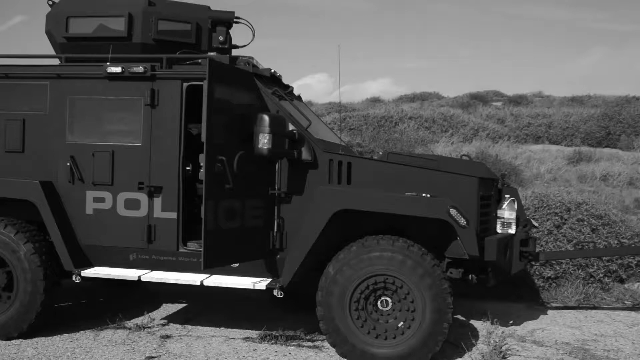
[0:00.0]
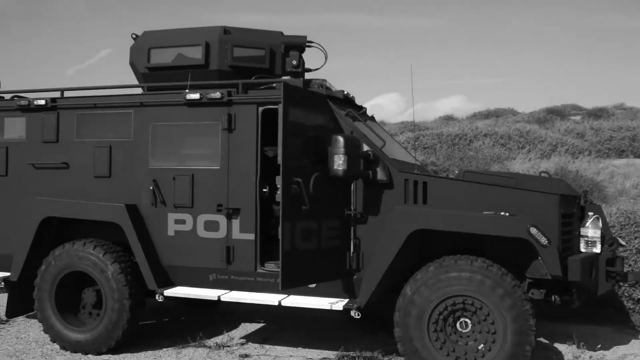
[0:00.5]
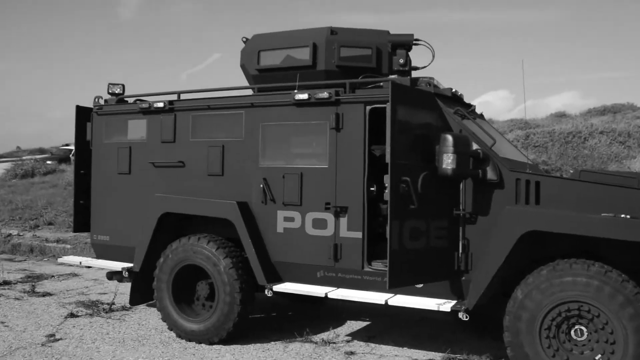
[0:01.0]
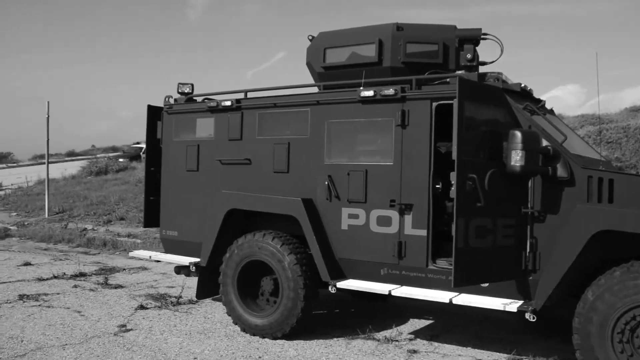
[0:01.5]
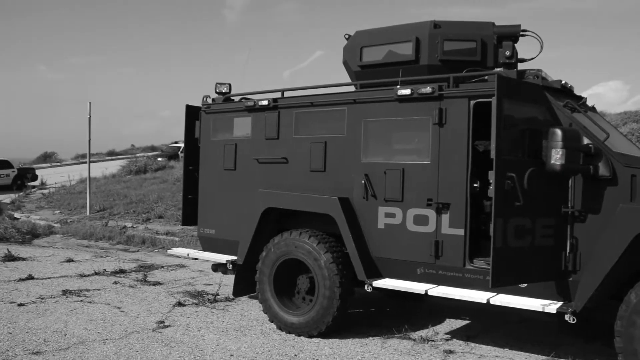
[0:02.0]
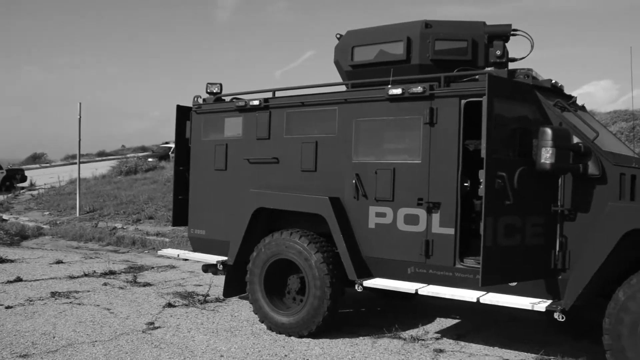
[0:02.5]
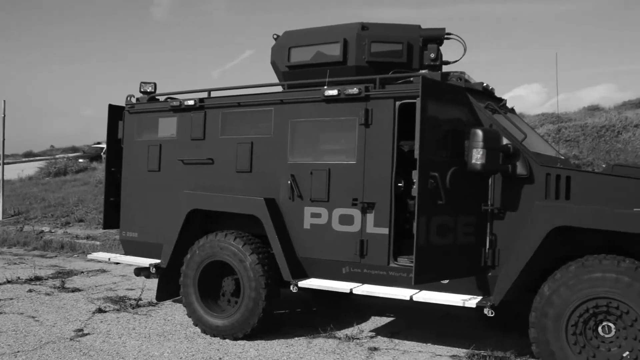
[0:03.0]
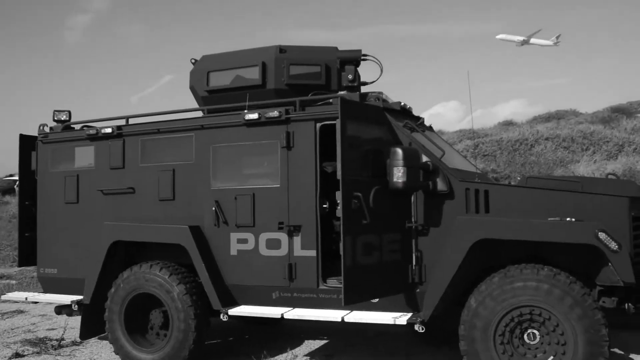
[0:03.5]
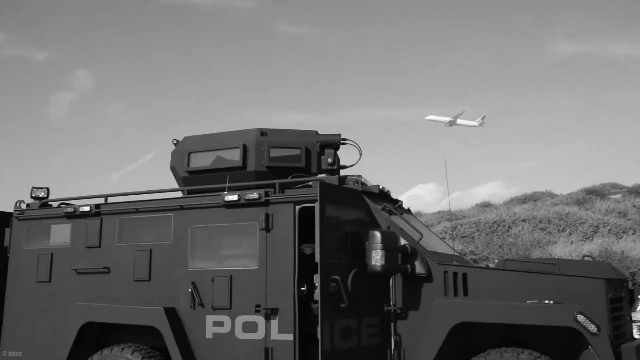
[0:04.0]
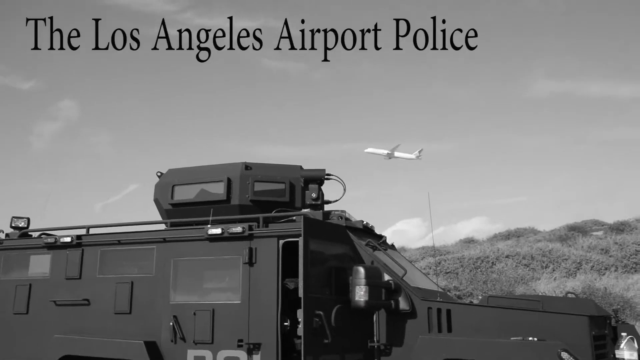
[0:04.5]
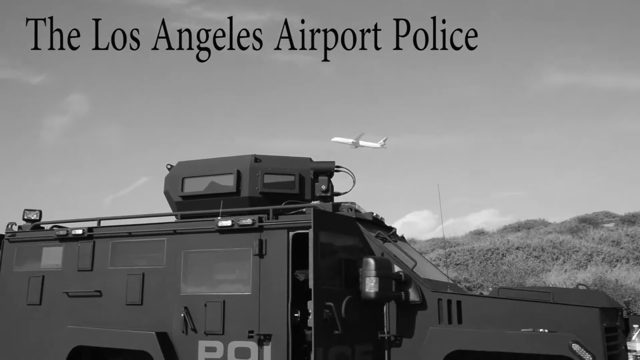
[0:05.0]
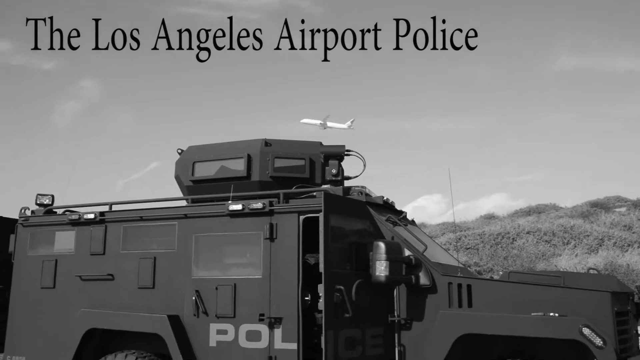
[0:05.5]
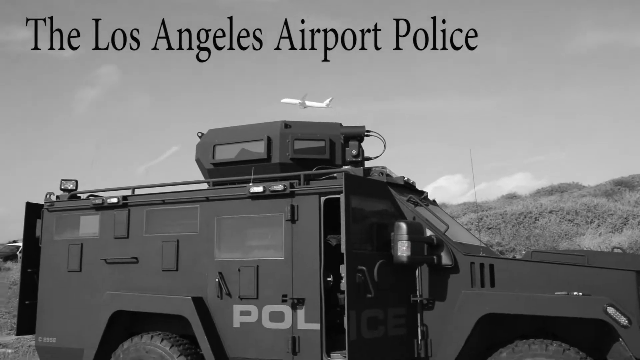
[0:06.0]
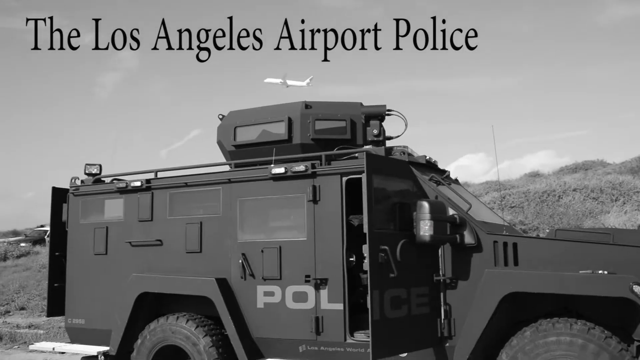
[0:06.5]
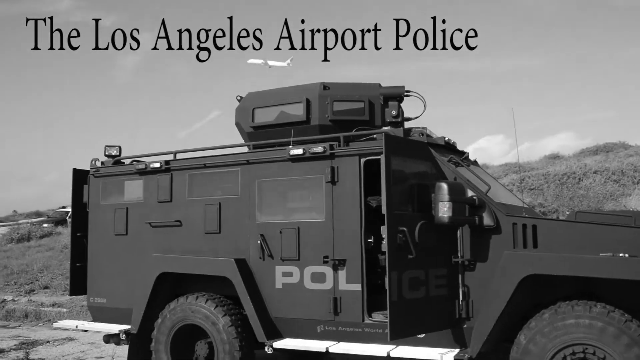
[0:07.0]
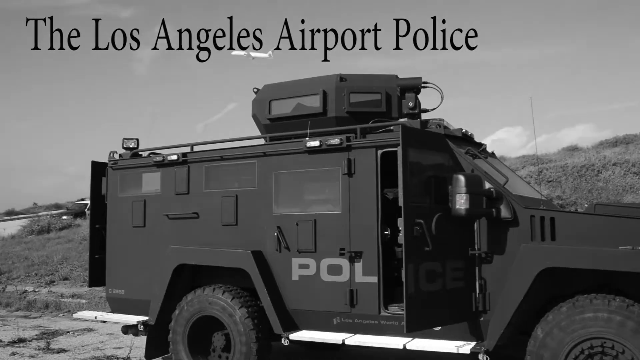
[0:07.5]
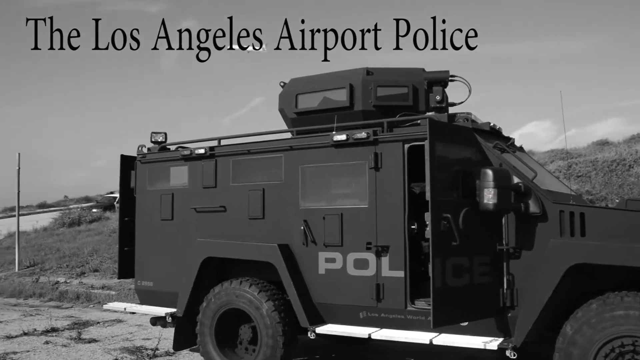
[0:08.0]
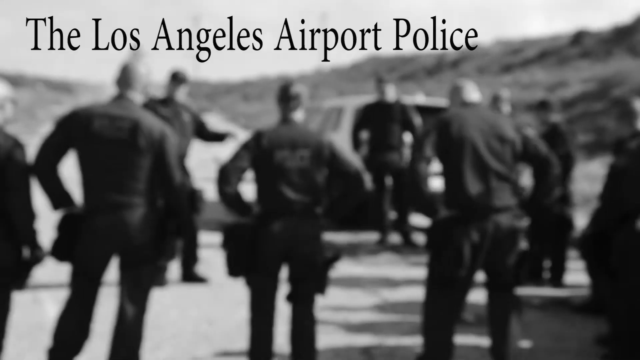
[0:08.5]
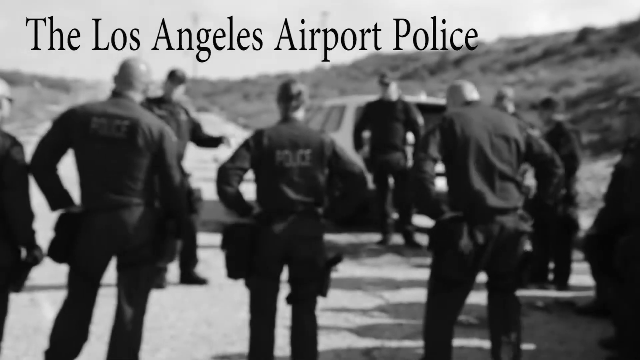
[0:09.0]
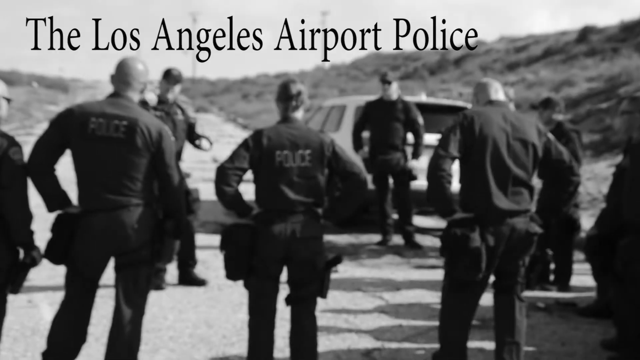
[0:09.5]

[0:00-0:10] The video opens on an image of a black police armored truck, shown in black and white. The truck's door is open, with the word "P.O.L." inscribed underneath, and the truck has big tires. Plants are all around in the background. The view moves from right to left to show the back of the truck, which is also open; a lone pole stands a few meters away and an airplane flies in the sky. Text in black appears that reads "to Los Angeles airport police". The scene then changes to various male and female officers dressed in black, some with the word "police" written on the back of their shirts, standing with their hands akimbo while an officer wearing a cap gesticulates and addresses them. One of the officers also has his hand akimbo. A white car is behind one of the officers.